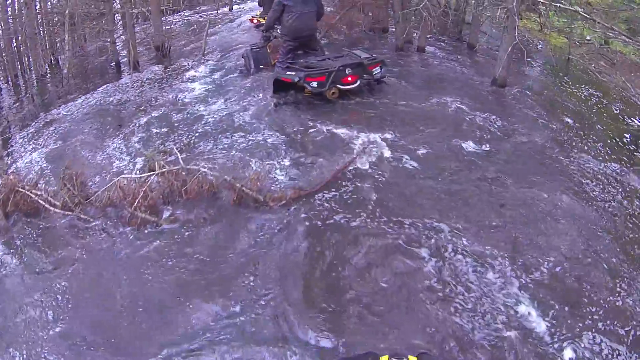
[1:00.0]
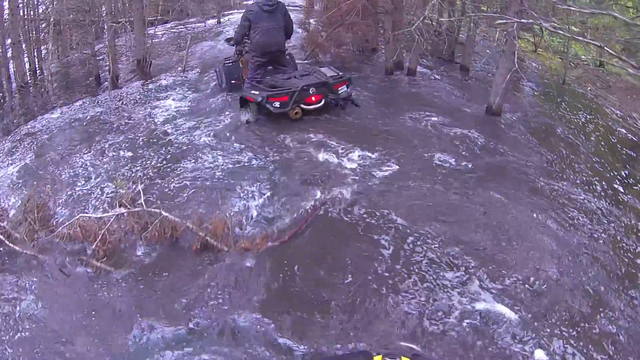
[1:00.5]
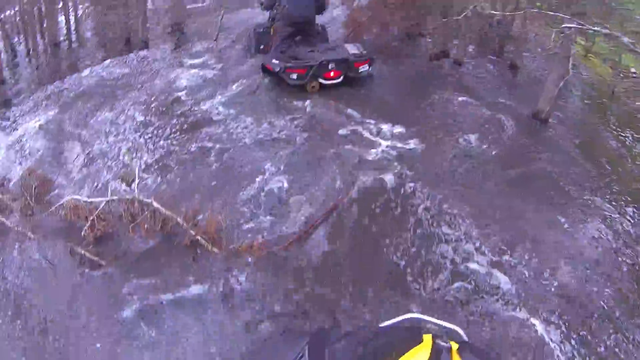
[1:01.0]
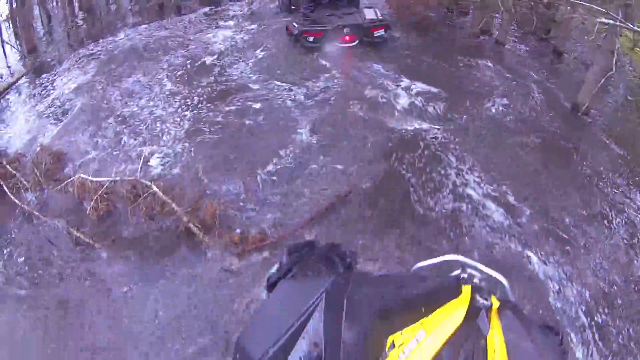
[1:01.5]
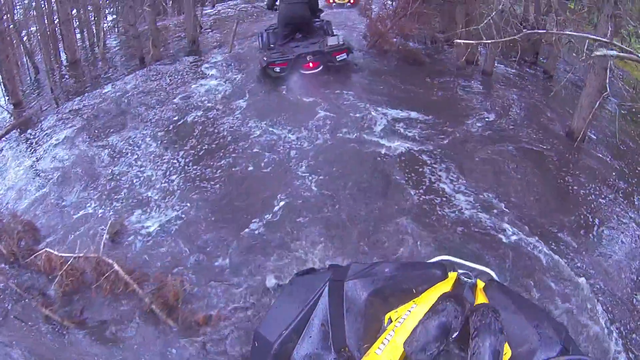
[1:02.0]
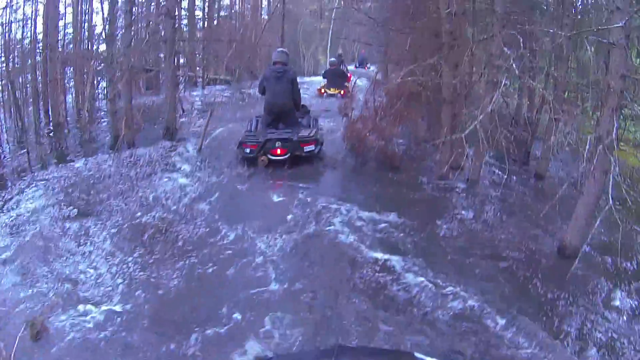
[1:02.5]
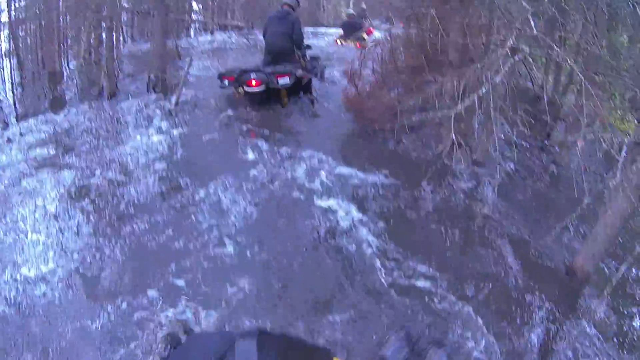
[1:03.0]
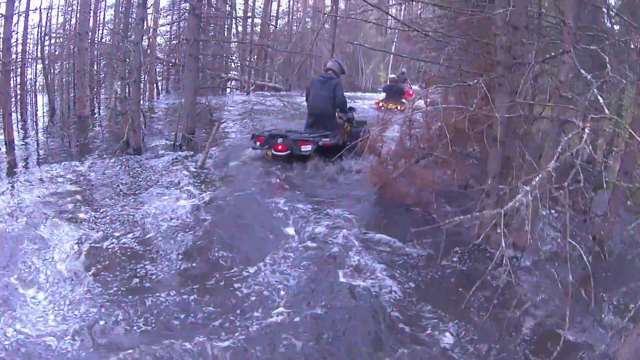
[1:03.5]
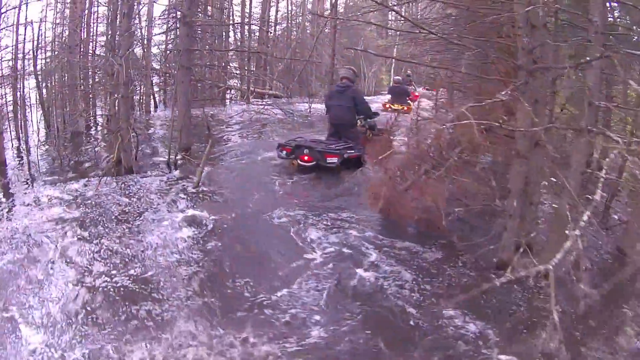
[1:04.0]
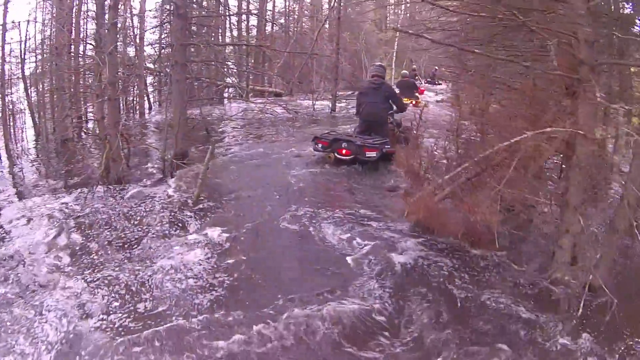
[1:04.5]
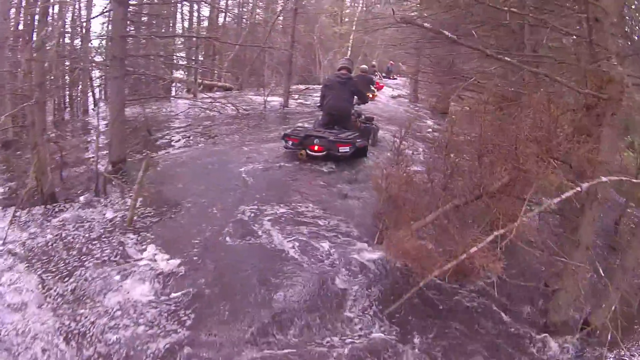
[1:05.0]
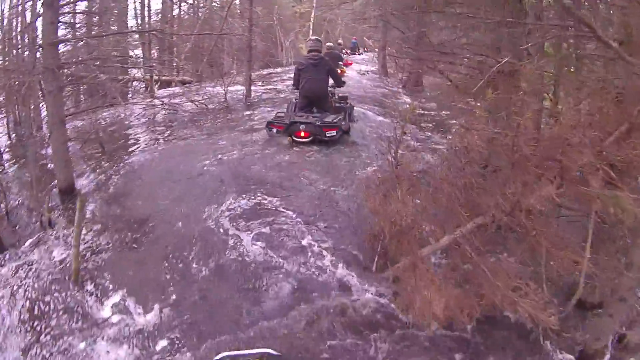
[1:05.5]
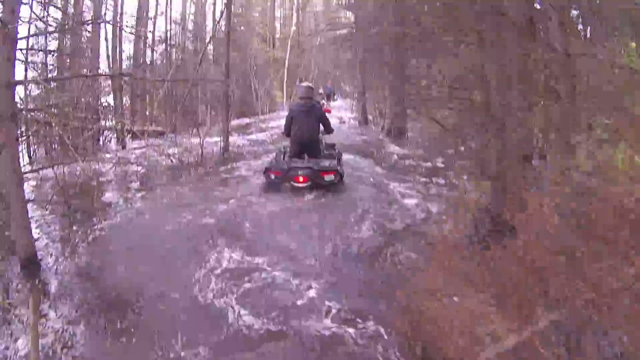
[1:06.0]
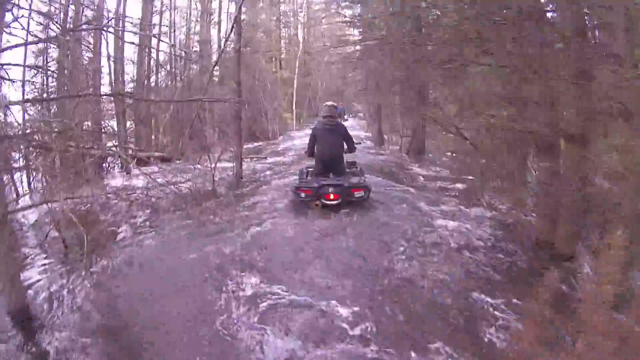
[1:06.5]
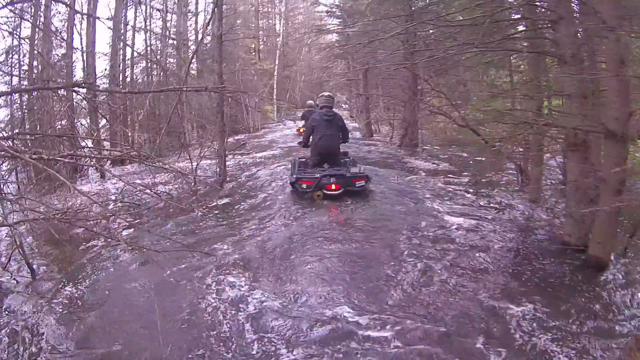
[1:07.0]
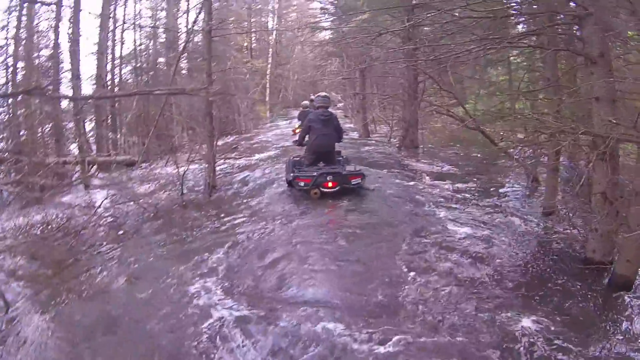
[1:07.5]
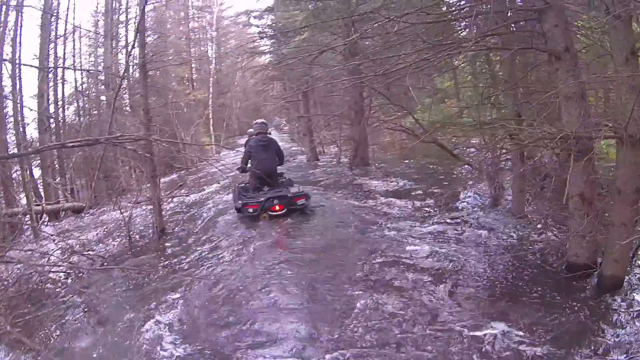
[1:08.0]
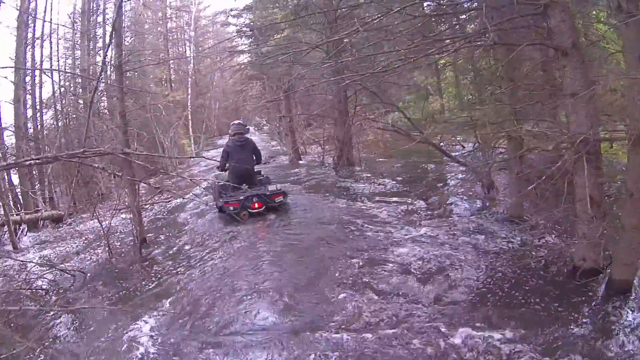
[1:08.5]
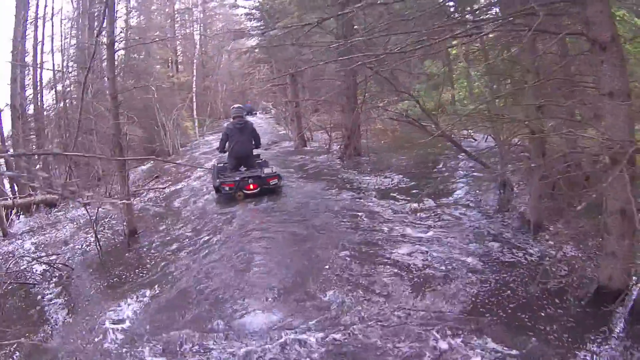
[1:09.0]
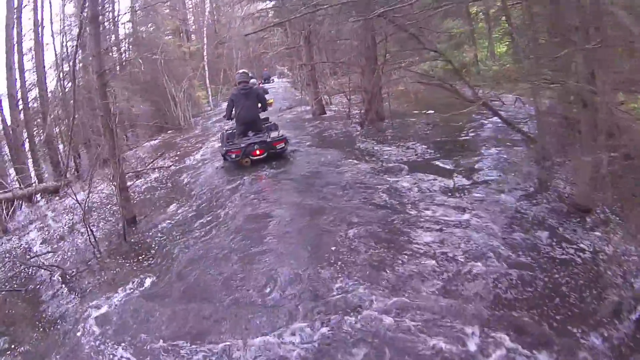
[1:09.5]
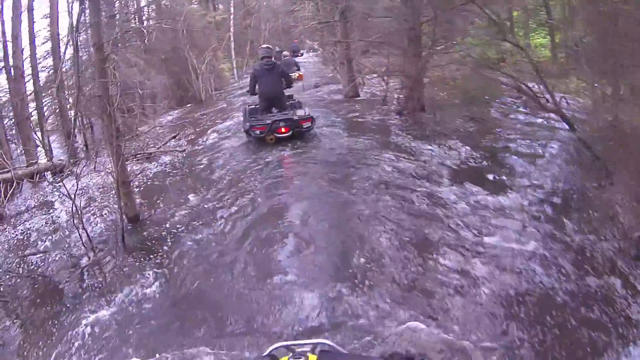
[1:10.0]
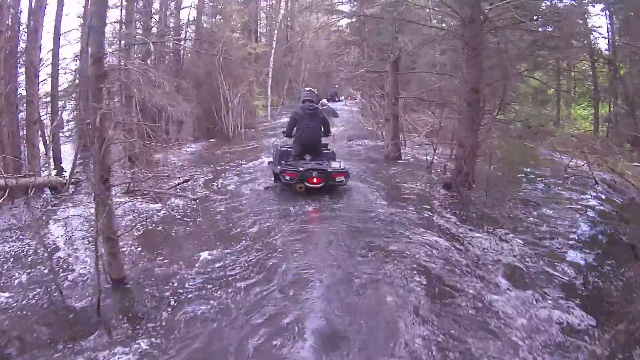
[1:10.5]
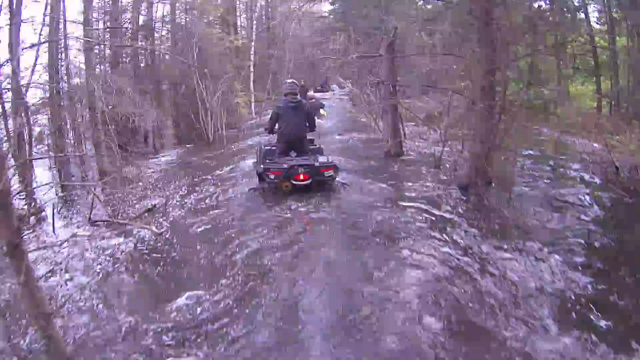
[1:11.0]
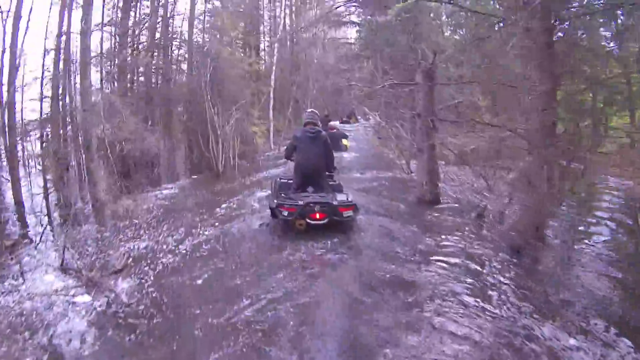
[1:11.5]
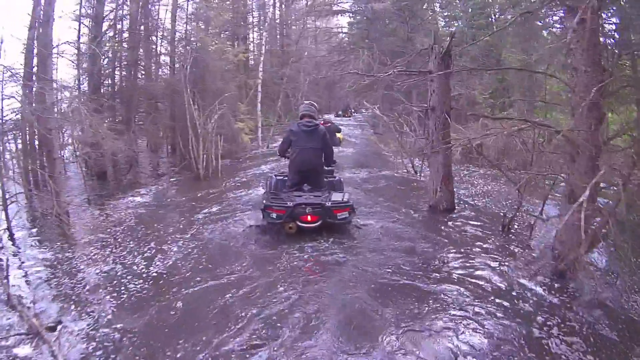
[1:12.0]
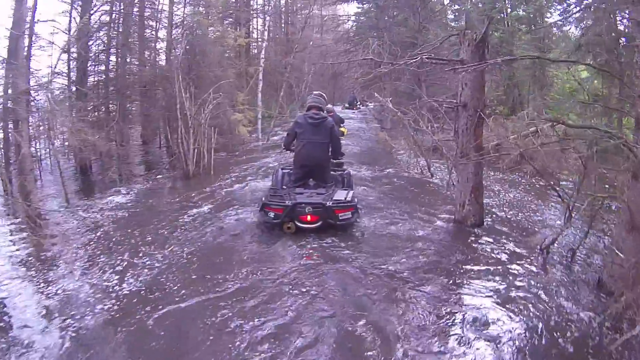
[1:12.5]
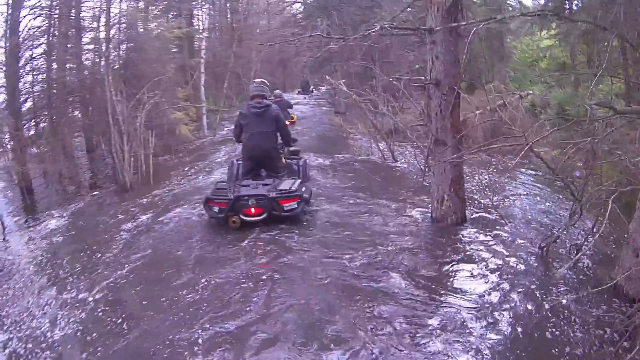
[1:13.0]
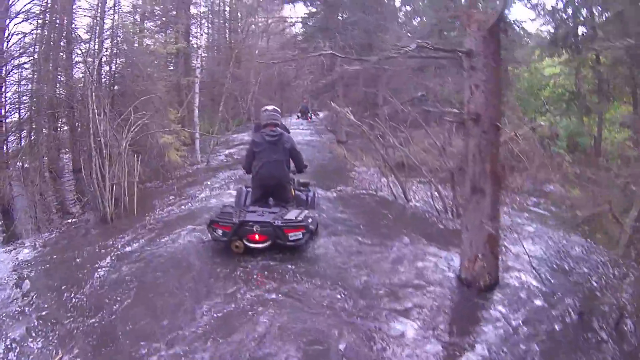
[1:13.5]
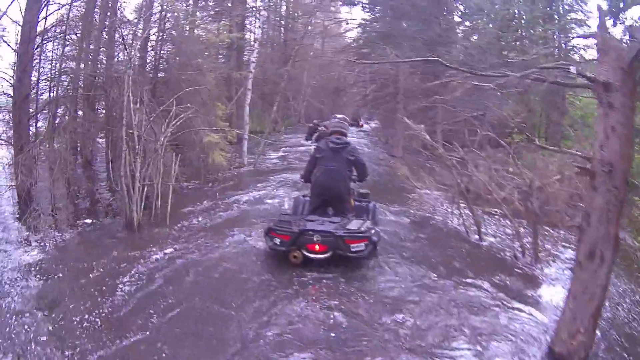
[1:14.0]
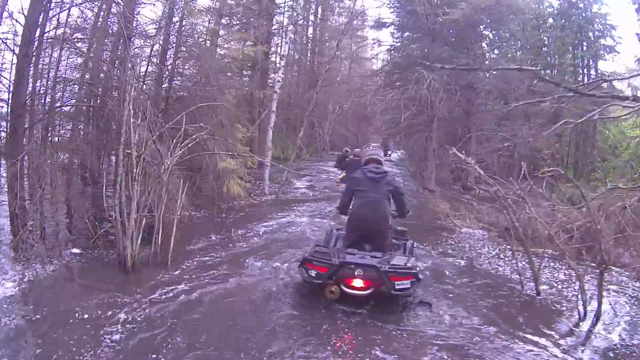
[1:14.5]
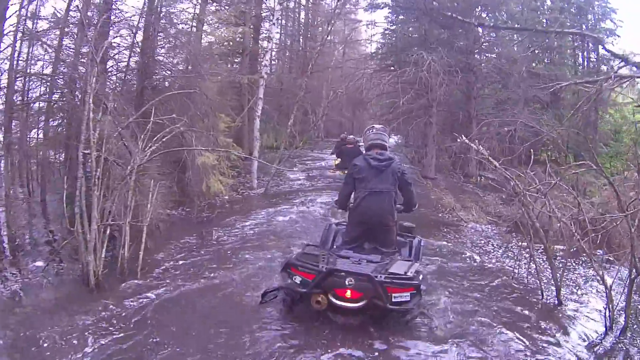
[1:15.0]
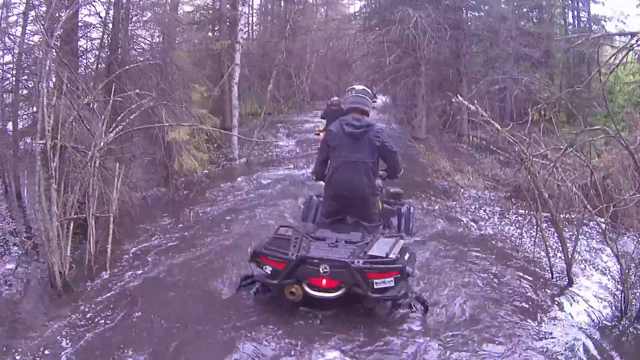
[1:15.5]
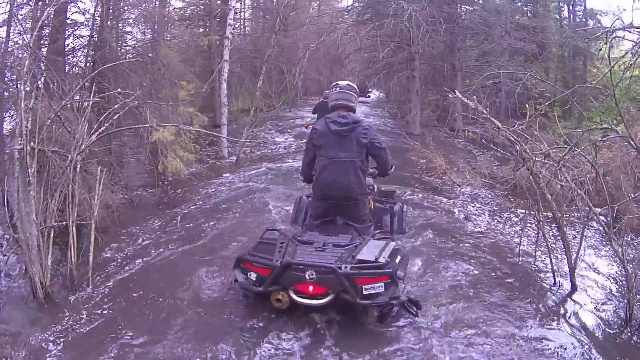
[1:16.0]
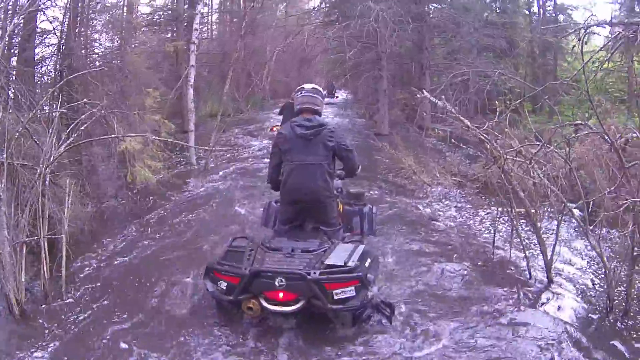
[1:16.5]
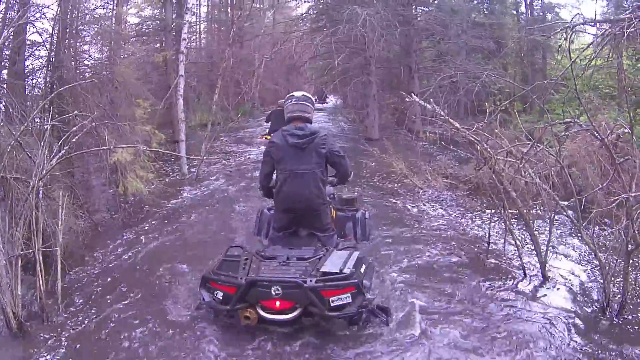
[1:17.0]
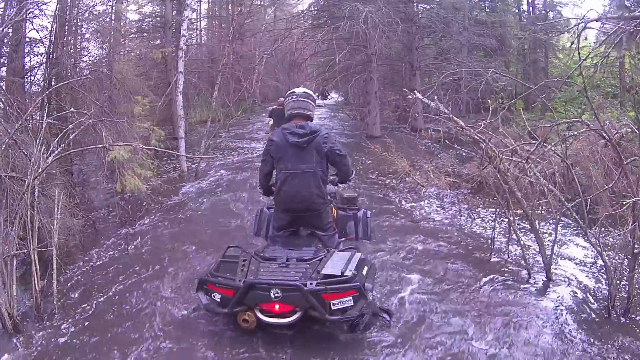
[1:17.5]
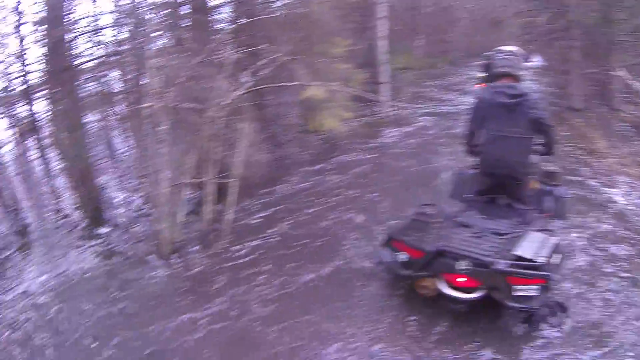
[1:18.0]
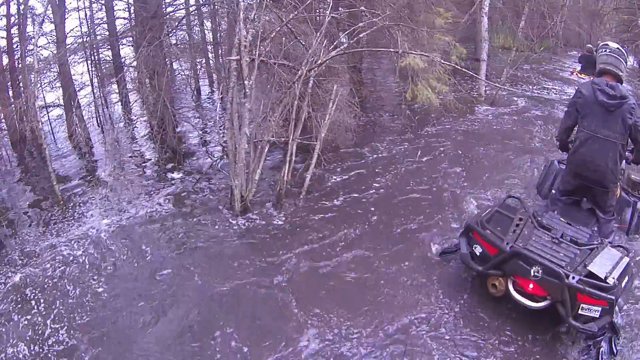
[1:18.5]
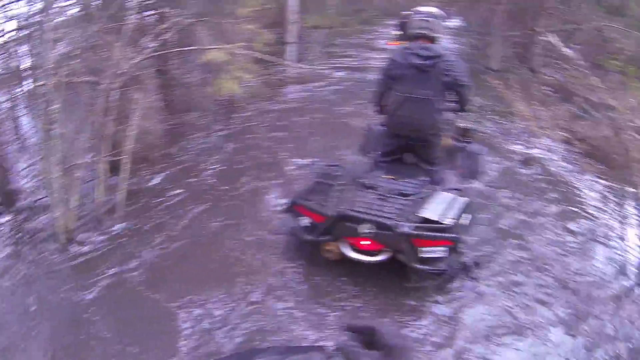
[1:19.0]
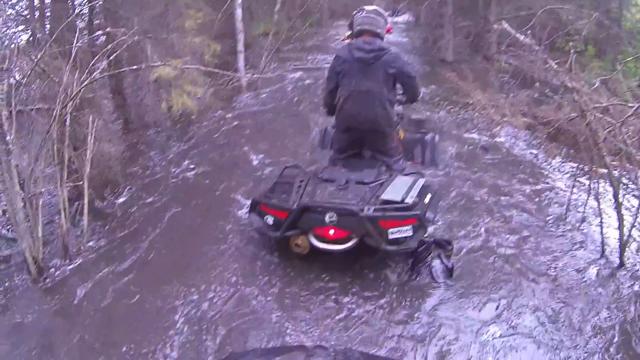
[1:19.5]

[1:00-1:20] The same setting is shown with a closer look at the guys driving the small mobile vehicles. They go over one big branch. The few in front, wearing gray jackets and hats, appear to be halfway standing up, trying to hold their balance on the difficult terrain. Huge pieces of branches stick out, there are dips in the middle of the pathway, bush hangs around, and trees get in the way. There is quite a lake behind them. There are almost no leaves or greenery around them. The black water is swirling in a circle, with things sticking out of it. At the very end, the guy in front of the person filming, half-standing on his motor vehicle, appears to get stuck as water comes in from different directions and starts to inundate the path. He looks a little freaked out.